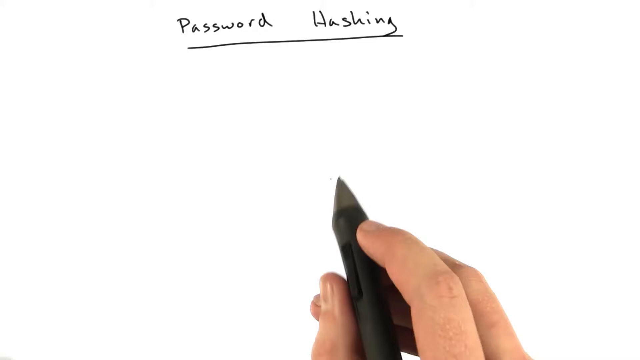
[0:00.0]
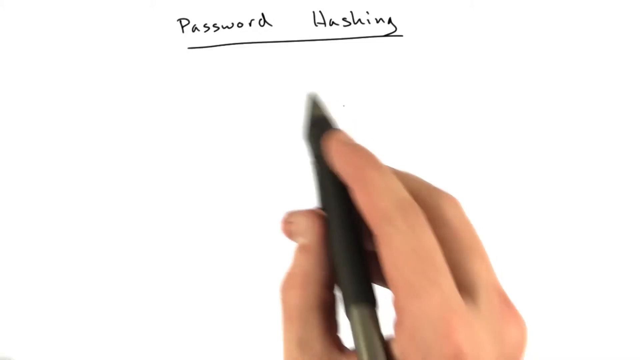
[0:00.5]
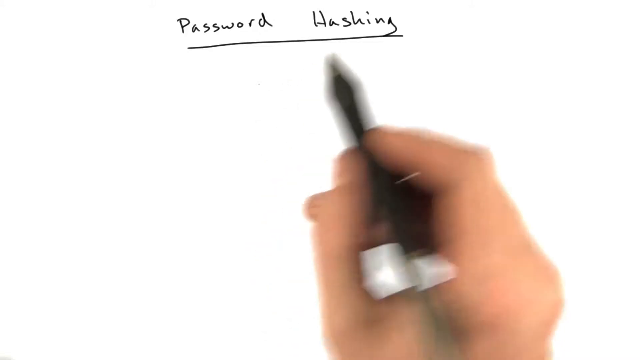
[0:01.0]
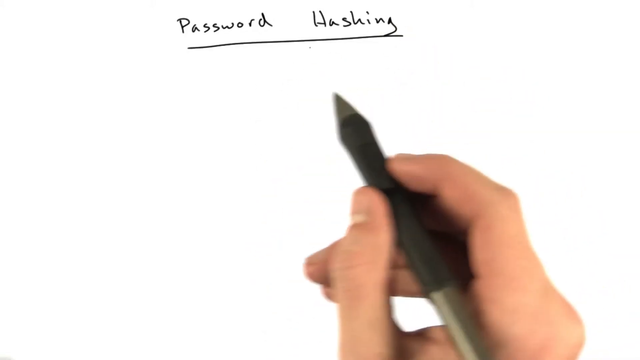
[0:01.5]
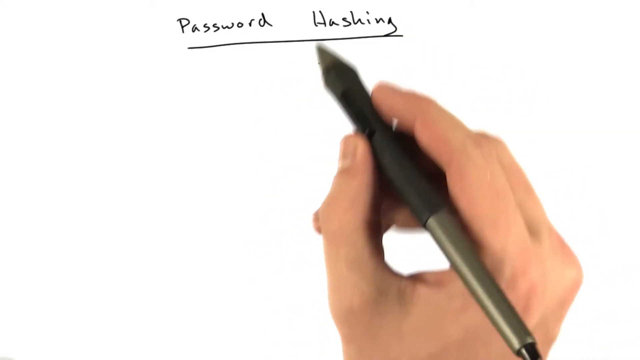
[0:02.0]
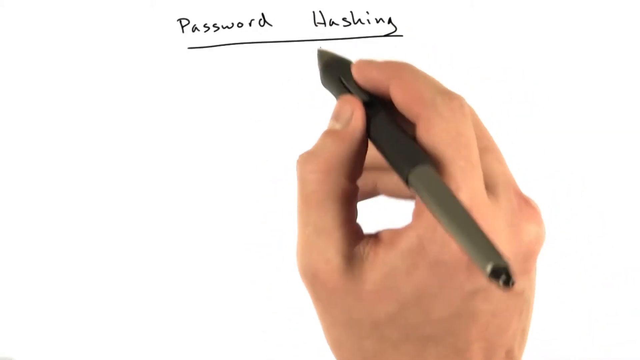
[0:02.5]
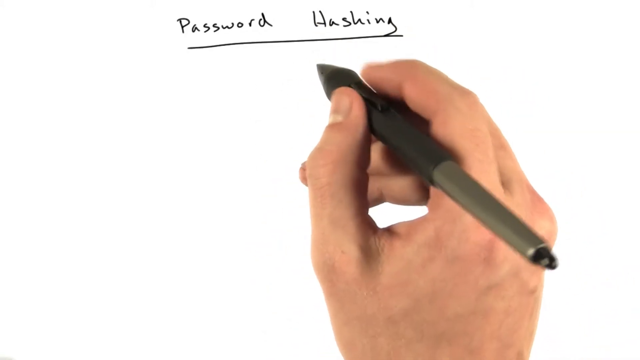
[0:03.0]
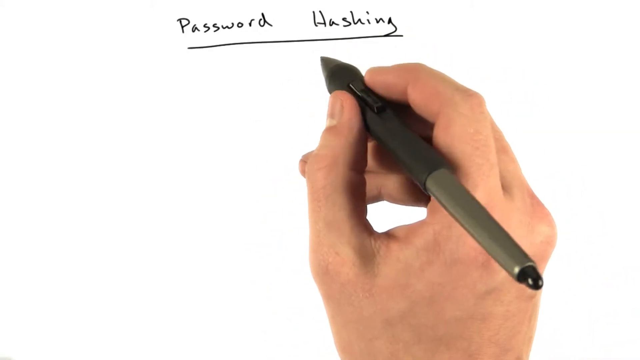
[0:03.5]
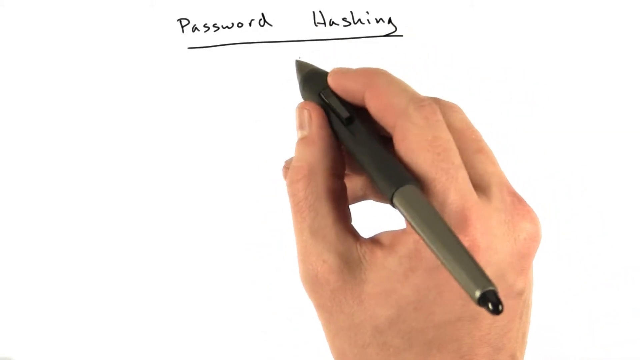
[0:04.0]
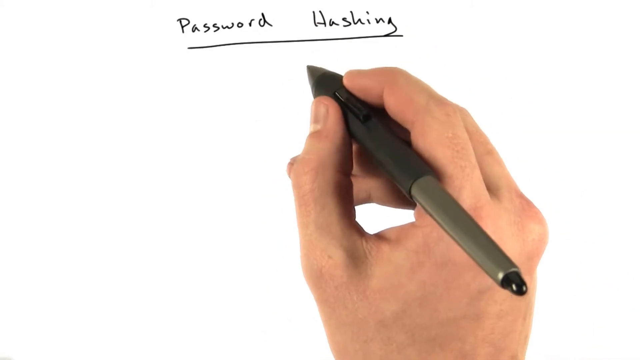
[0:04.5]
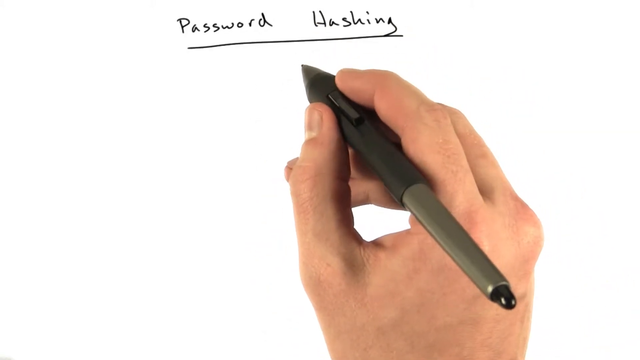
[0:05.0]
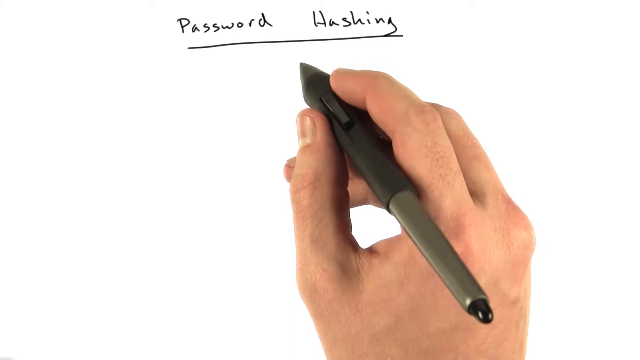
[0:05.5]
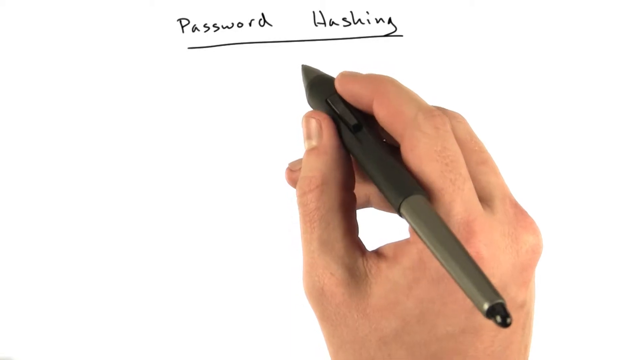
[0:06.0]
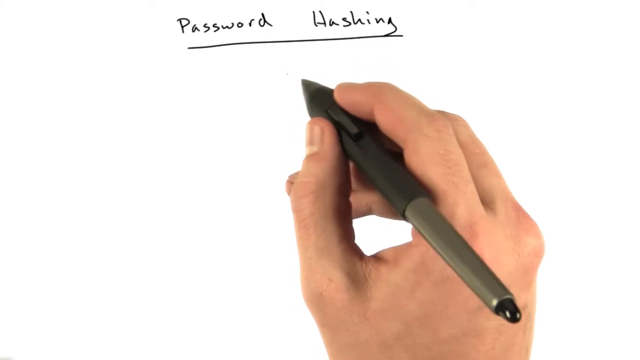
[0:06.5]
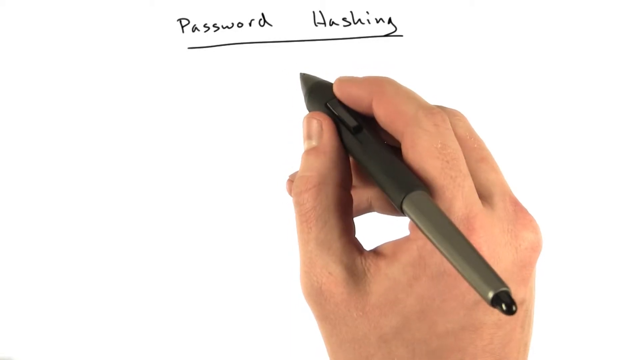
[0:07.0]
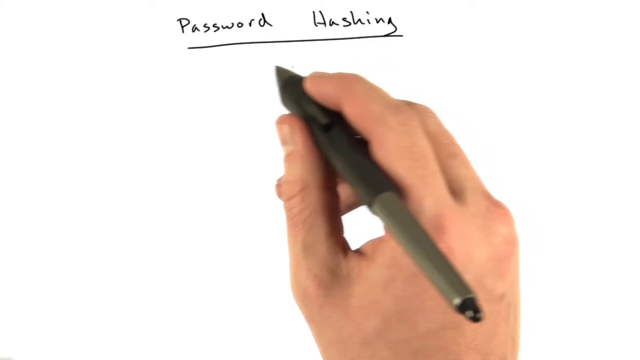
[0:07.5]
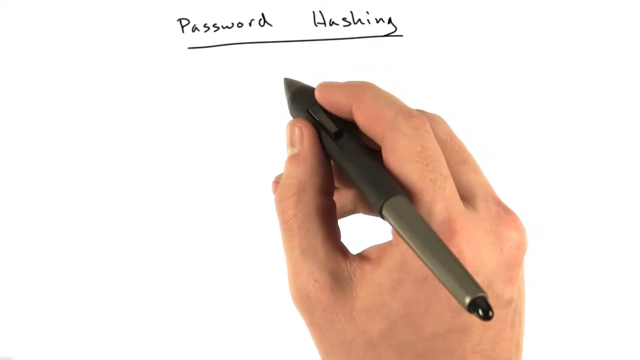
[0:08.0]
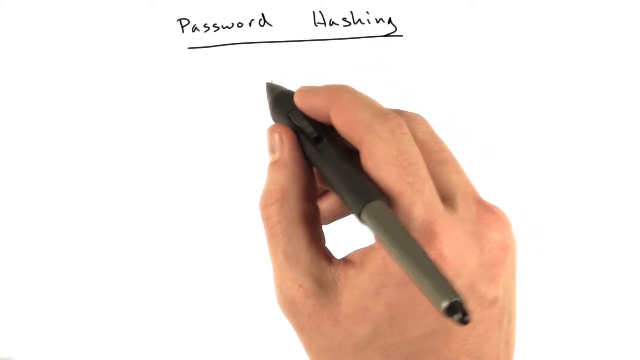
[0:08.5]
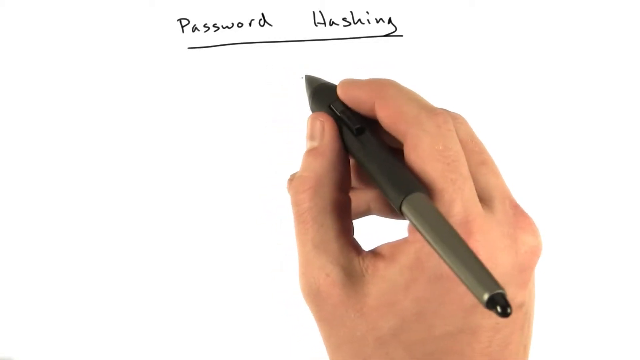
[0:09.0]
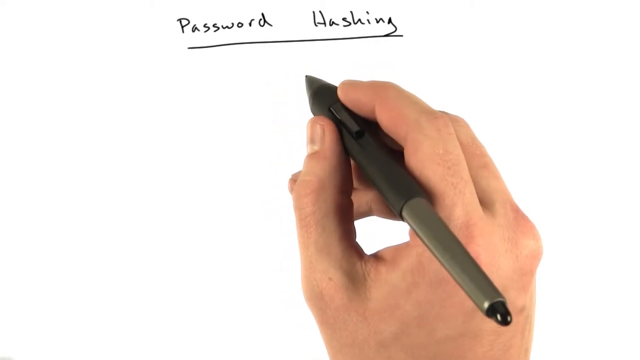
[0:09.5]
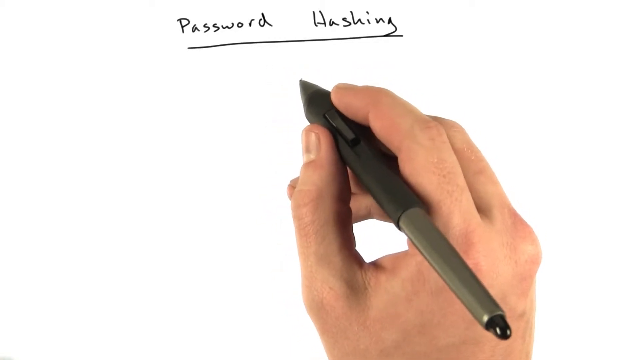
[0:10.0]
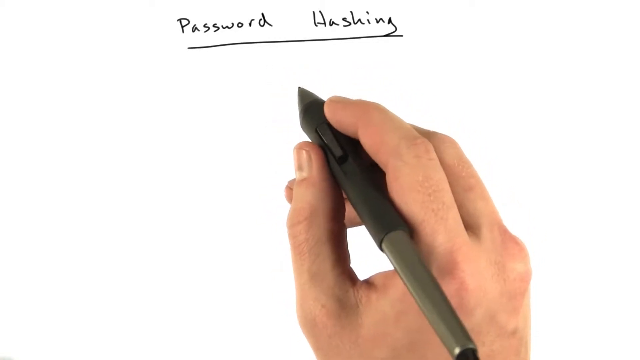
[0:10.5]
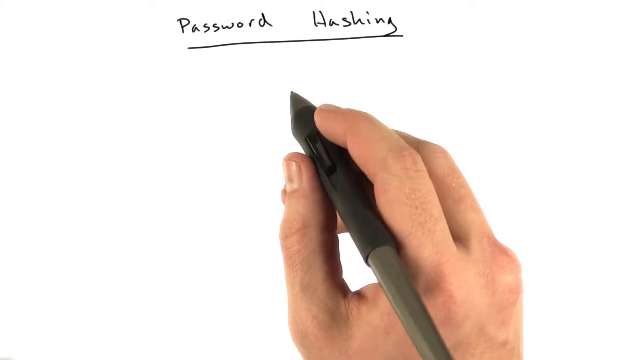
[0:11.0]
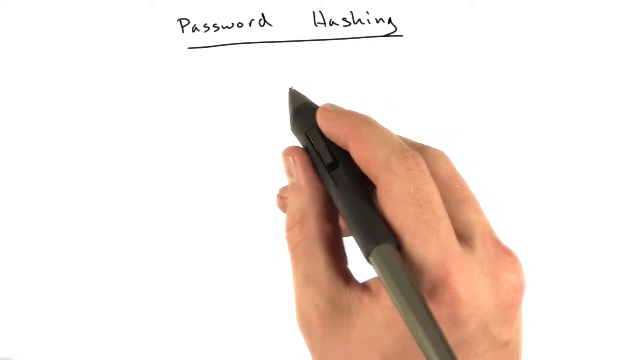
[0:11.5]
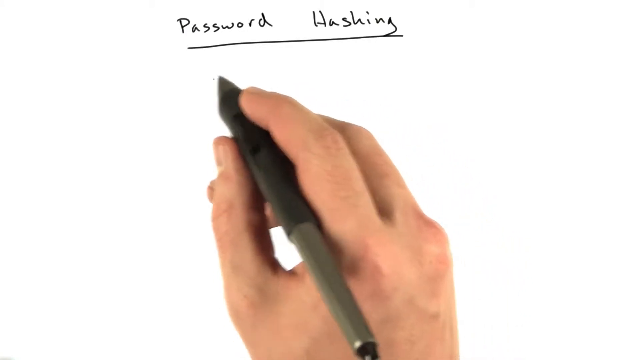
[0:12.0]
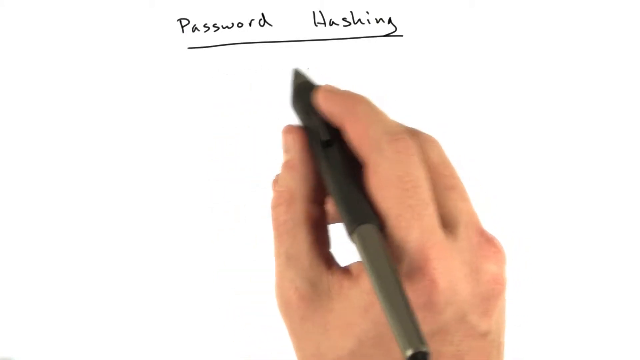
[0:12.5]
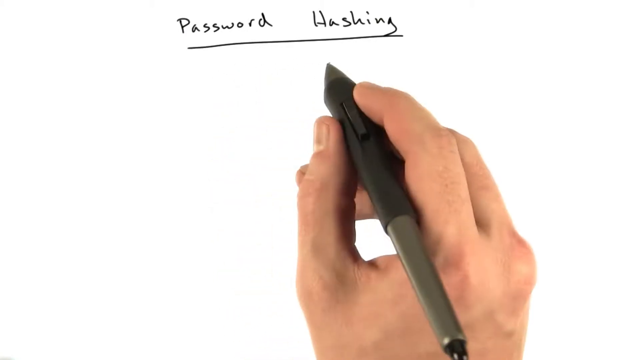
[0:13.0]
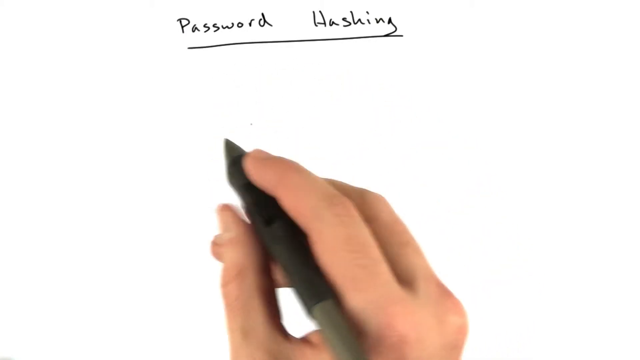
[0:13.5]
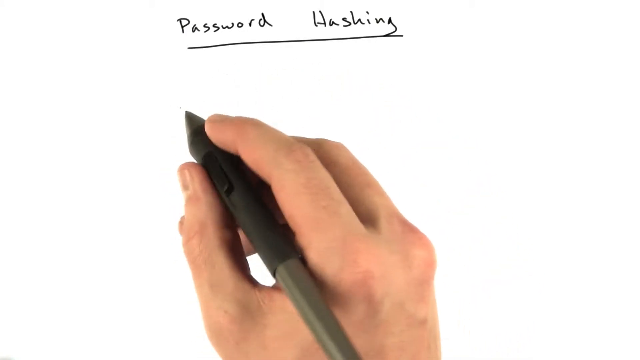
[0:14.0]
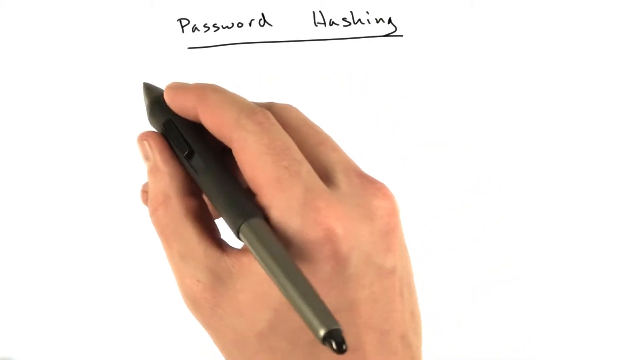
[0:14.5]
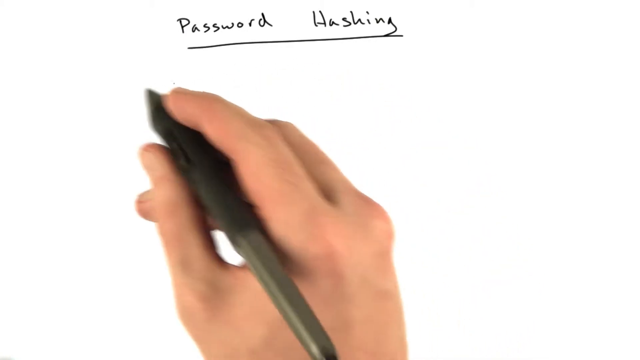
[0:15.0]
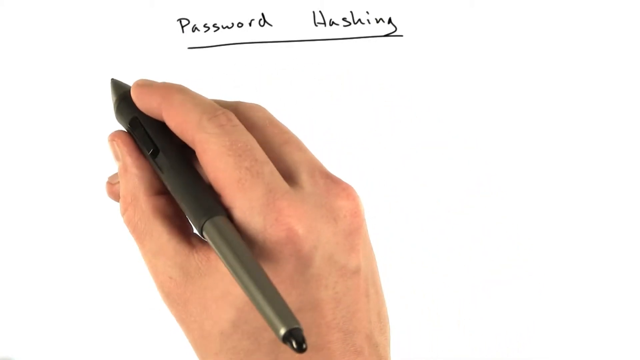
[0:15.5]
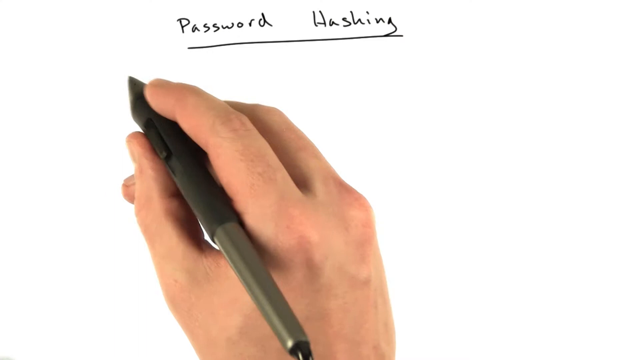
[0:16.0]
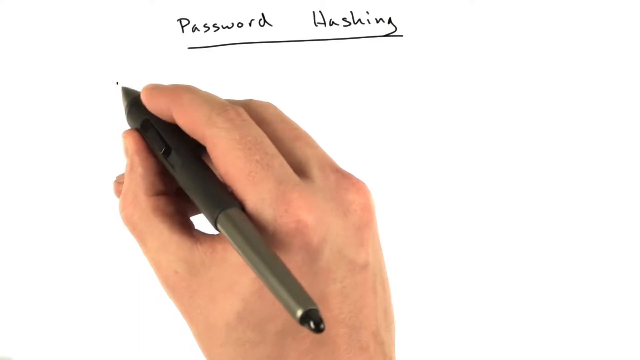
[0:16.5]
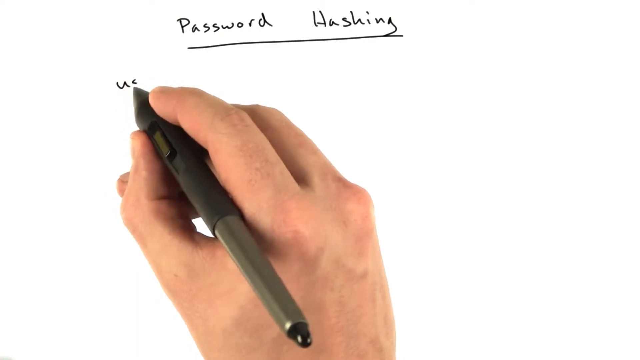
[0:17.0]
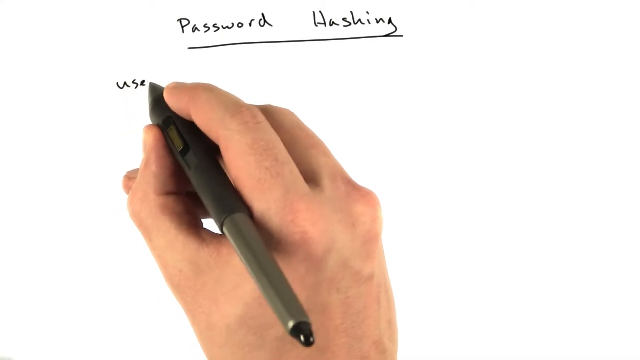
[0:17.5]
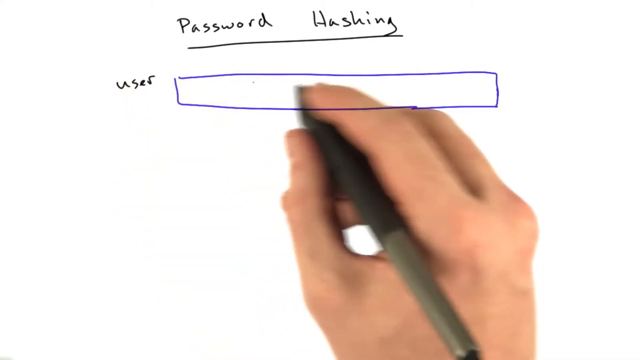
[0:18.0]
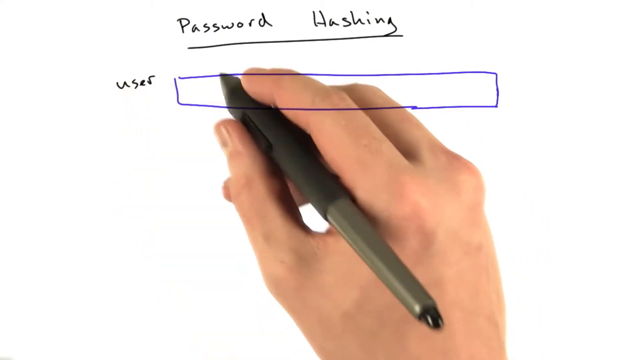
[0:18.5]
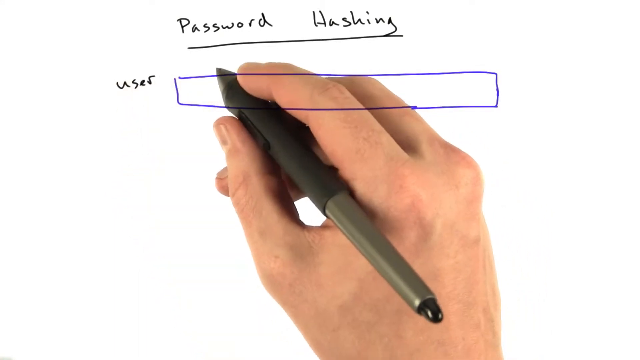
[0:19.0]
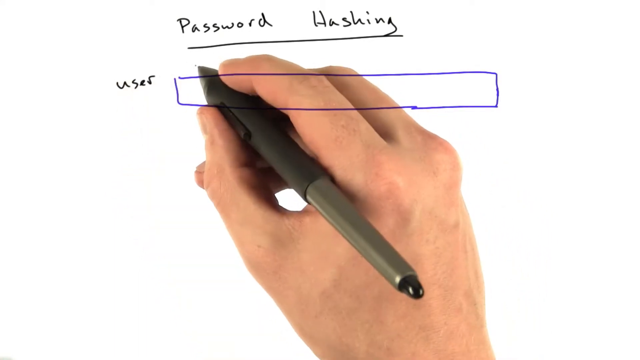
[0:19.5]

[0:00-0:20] A presentation on a topic called "password hashing" is shown. A hand holding a pen has drawn and written the title on the screen; the background is white and the text is black and underlined with a line. The hand moves from side to side without drawing anything, apparently as the person recording the video explains the topic. Toward the end, the text "user" appears, and he begins writing identification, probably for each cell in the list.